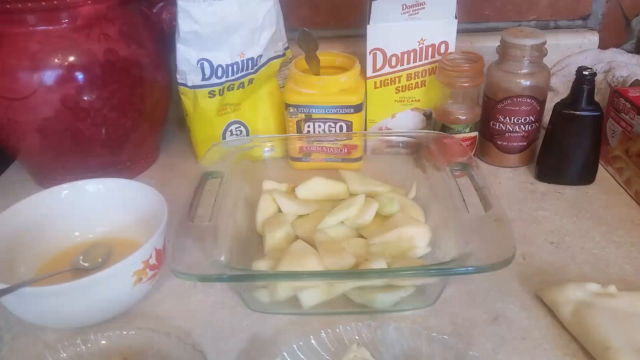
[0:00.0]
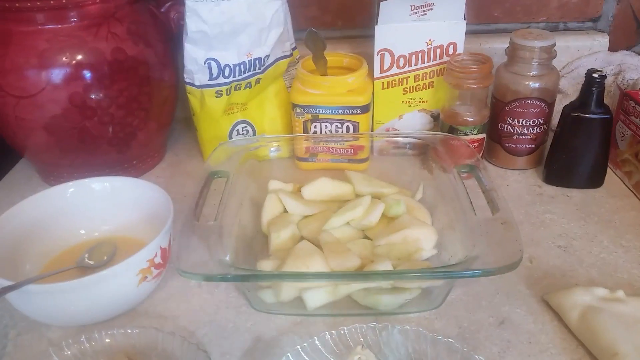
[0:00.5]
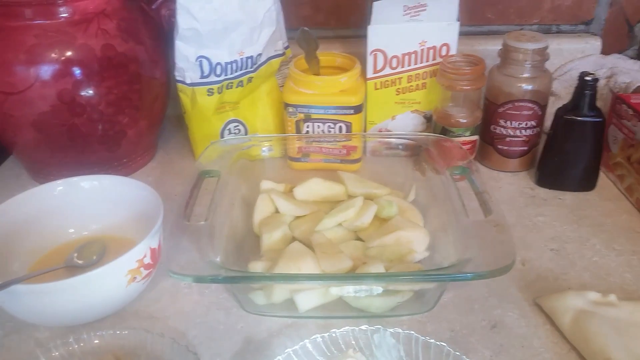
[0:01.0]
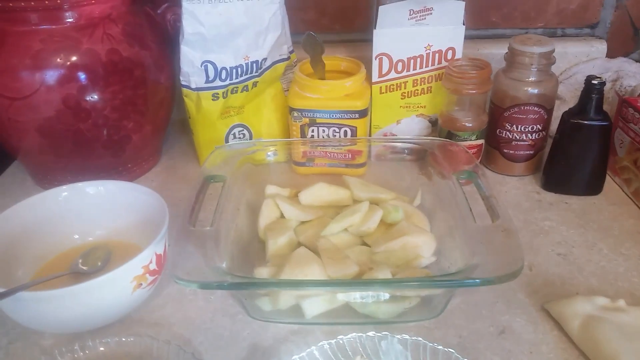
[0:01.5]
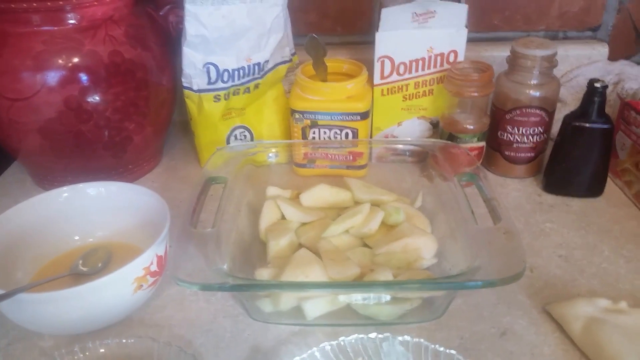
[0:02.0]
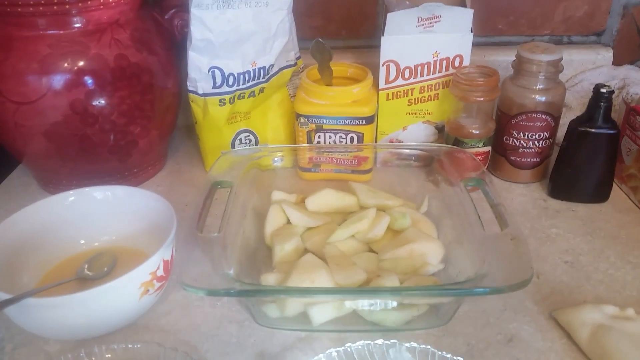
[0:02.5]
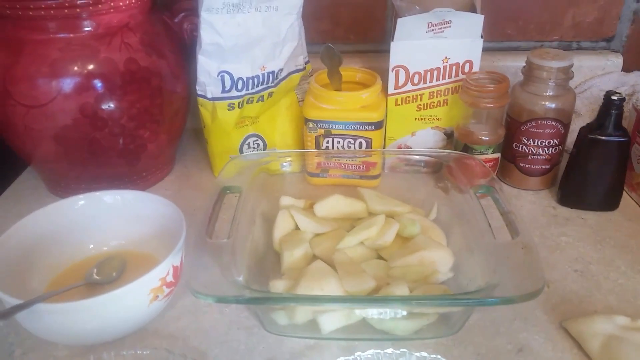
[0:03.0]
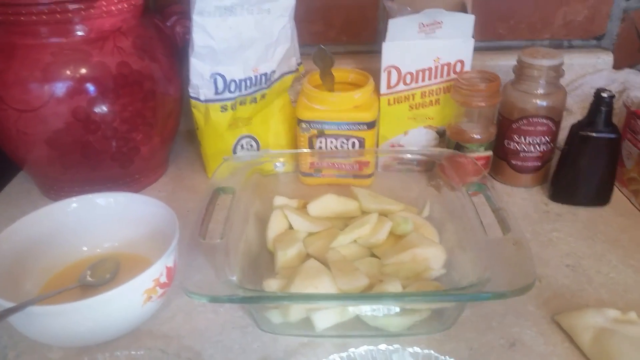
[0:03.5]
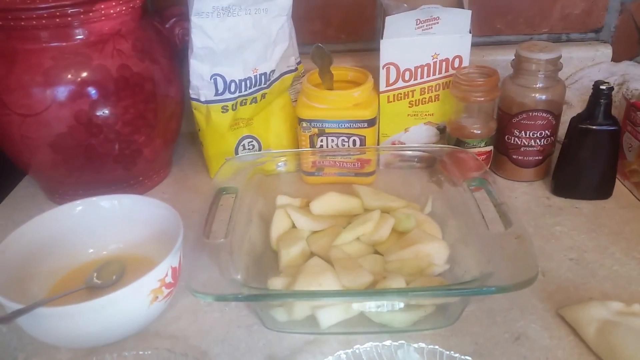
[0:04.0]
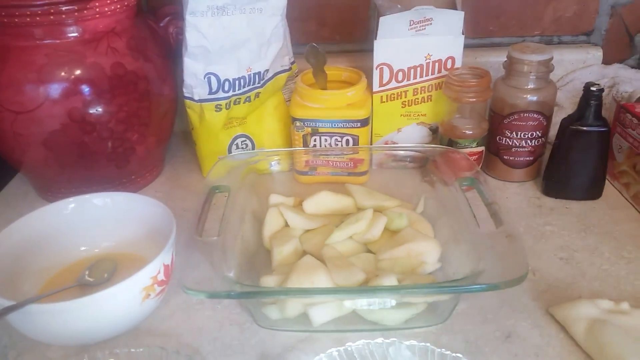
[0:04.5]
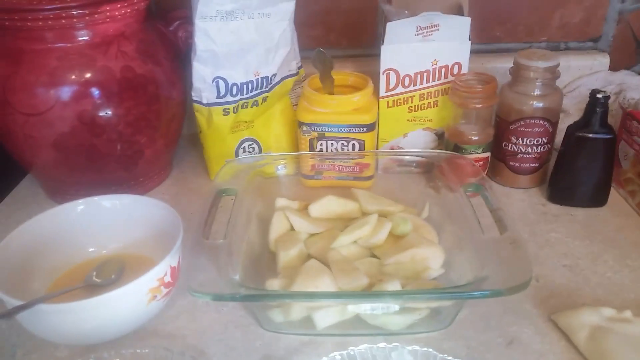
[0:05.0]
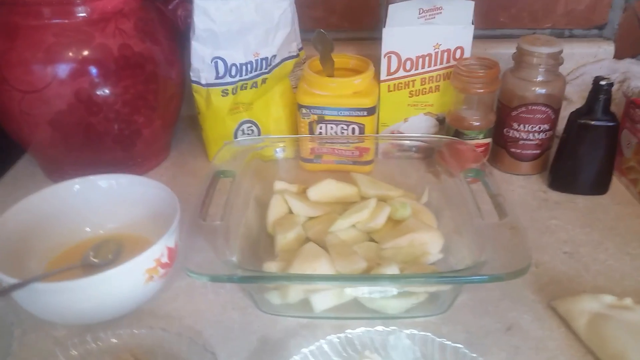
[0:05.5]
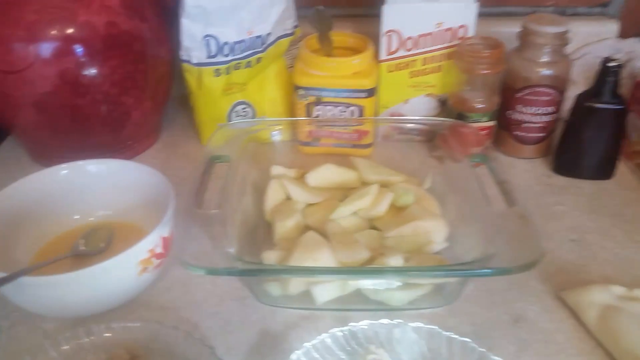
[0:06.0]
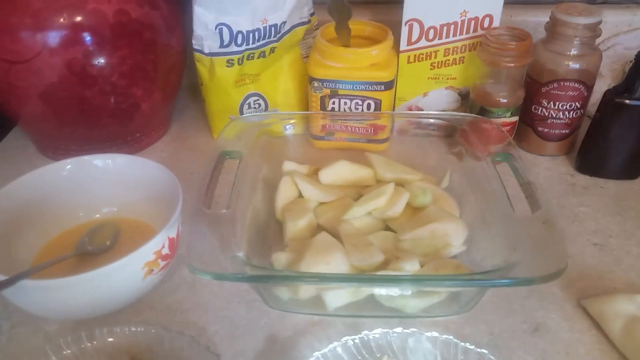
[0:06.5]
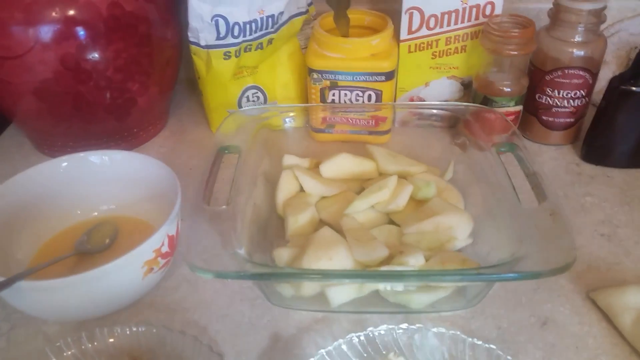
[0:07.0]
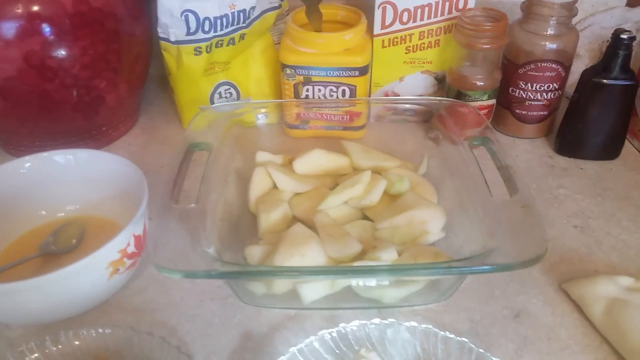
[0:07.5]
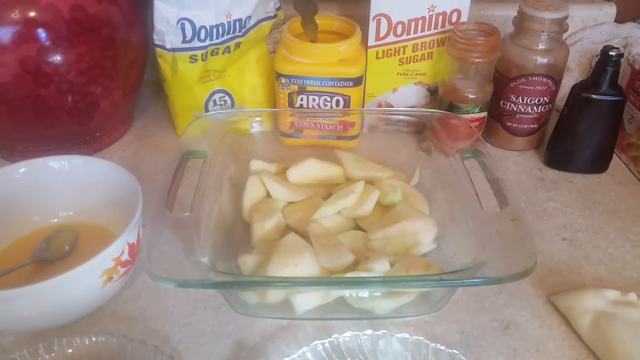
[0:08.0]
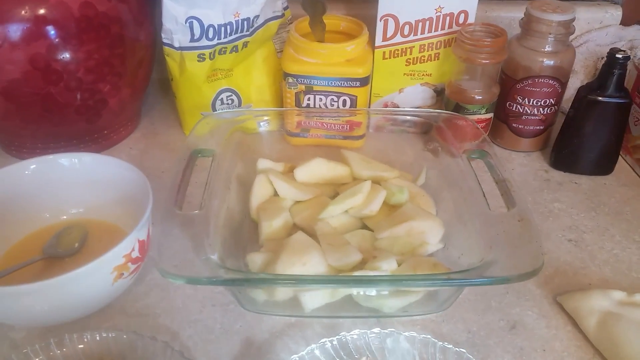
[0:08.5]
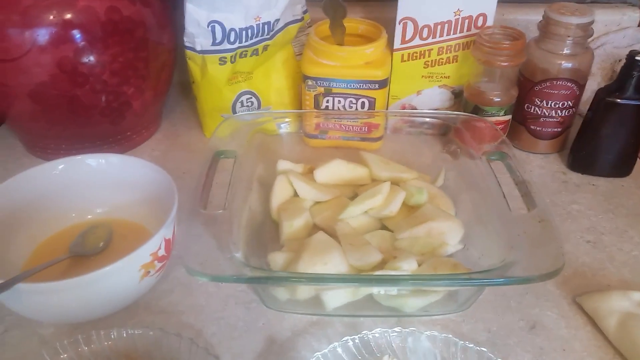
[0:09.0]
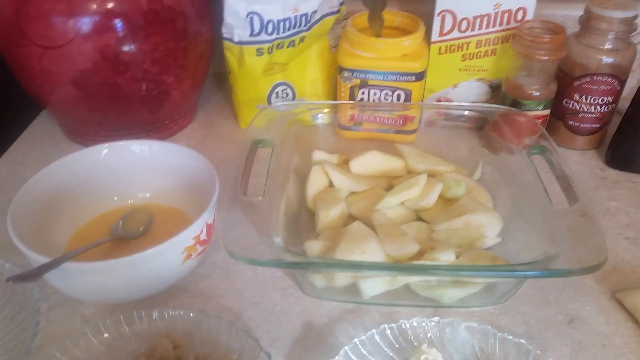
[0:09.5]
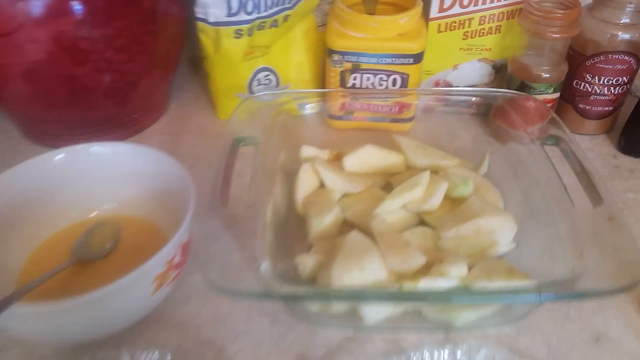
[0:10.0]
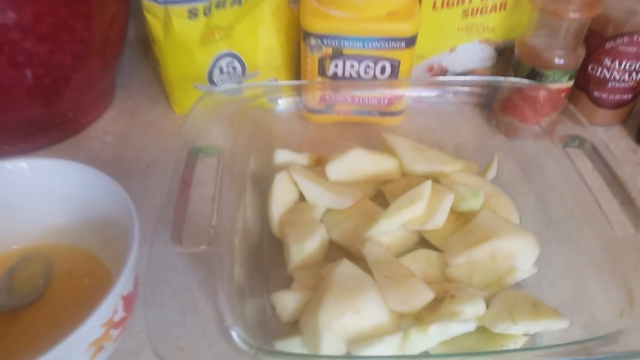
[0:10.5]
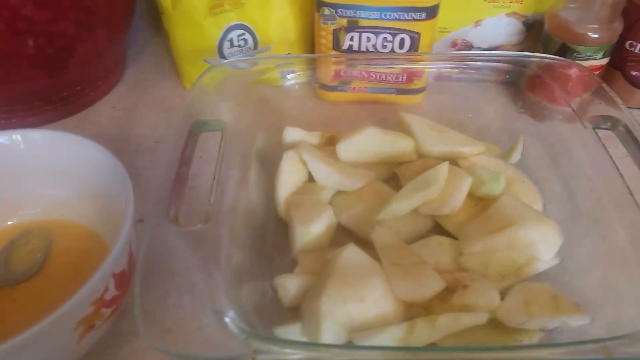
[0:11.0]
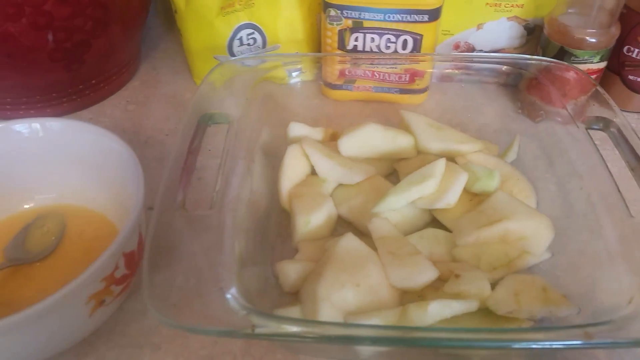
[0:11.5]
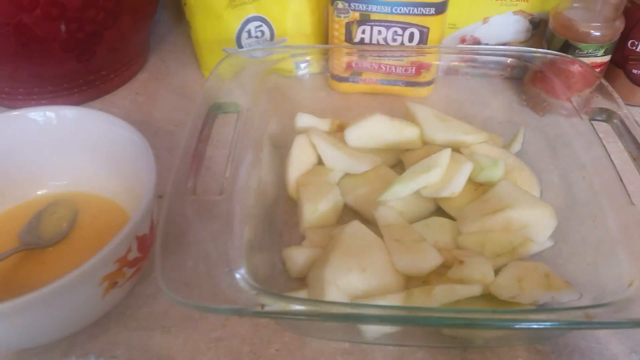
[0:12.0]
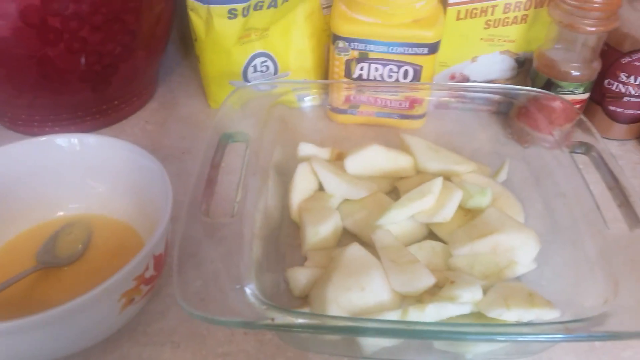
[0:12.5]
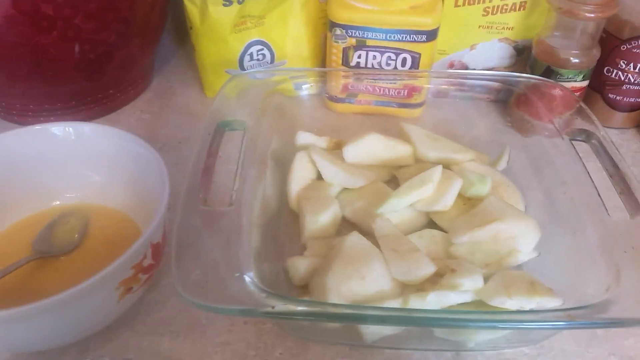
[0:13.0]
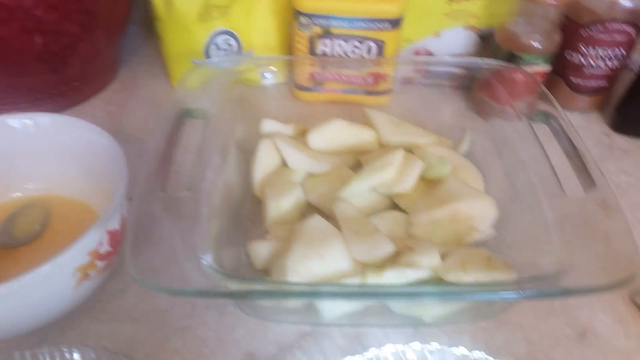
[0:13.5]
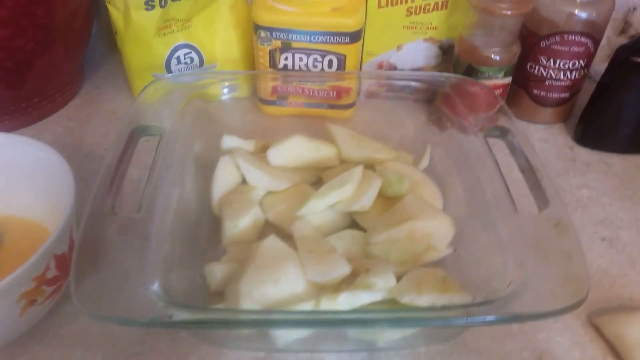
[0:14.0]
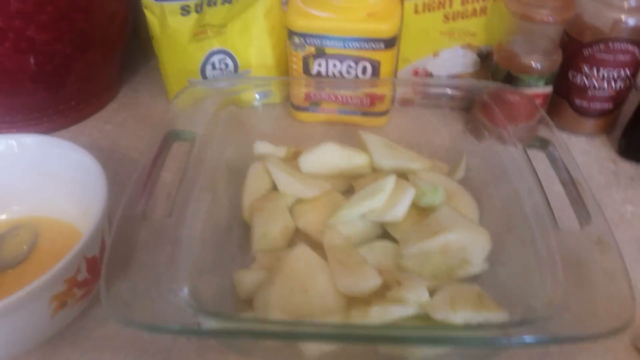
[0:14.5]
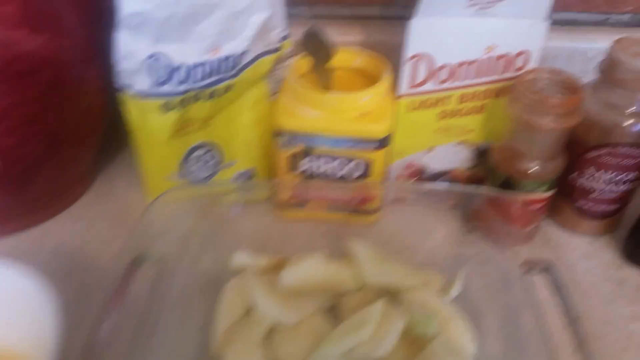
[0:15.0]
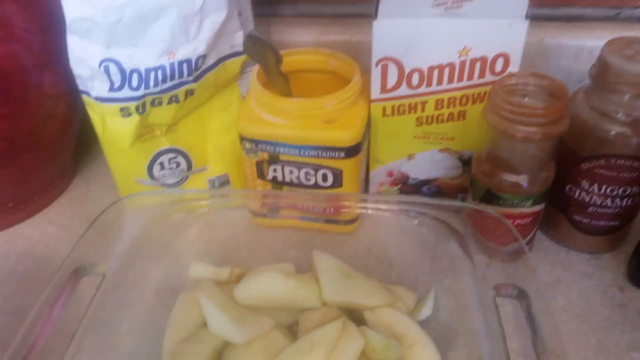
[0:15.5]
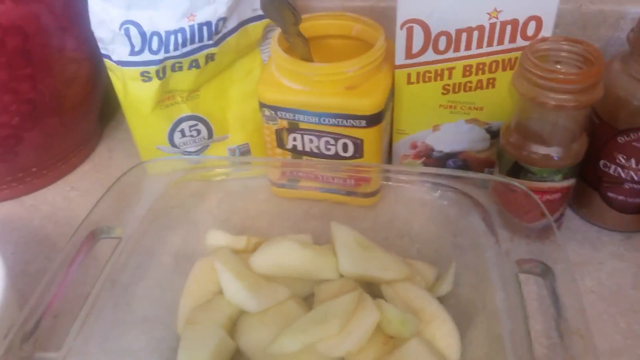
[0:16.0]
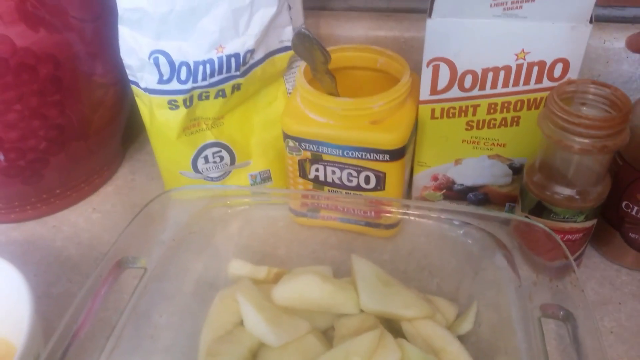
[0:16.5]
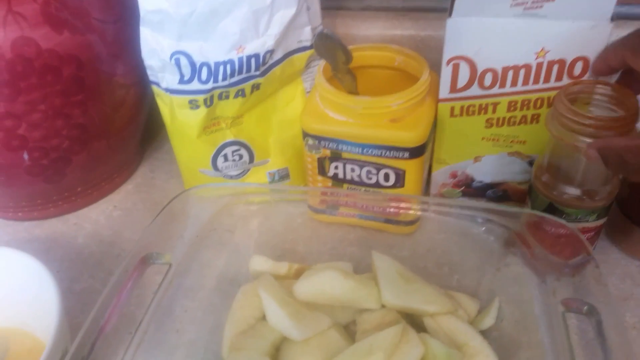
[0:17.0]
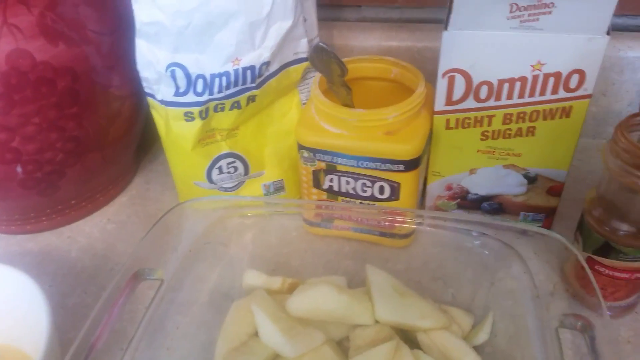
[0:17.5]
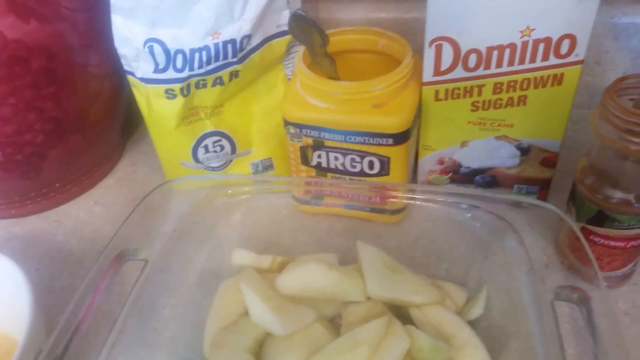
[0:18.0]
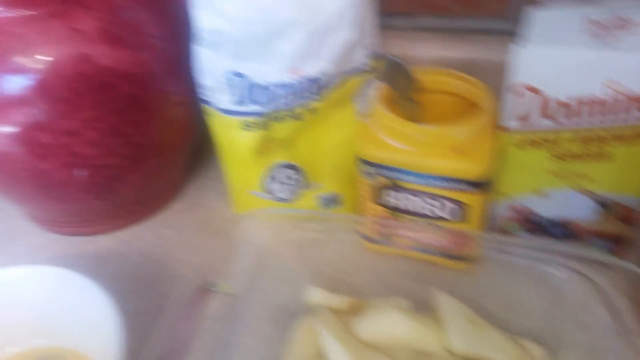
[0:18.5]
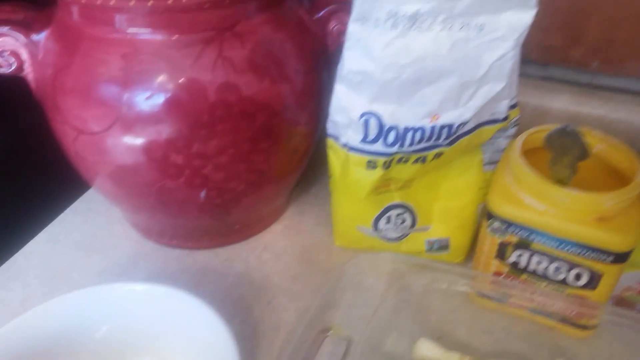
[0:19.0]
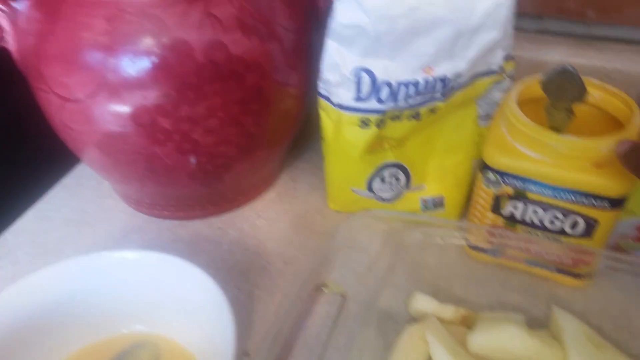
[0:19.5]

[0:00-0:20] The video opens on Argo and a baking setup in a home-style kitchen with a white background. There is what seems to be baking soda, apples in a baking pan, sugar, brown sugar, cinnamon, and a few other ingredients, along with a bowl of wet ingredients that may be eggs. No people or animals appear, and the setting does not change.